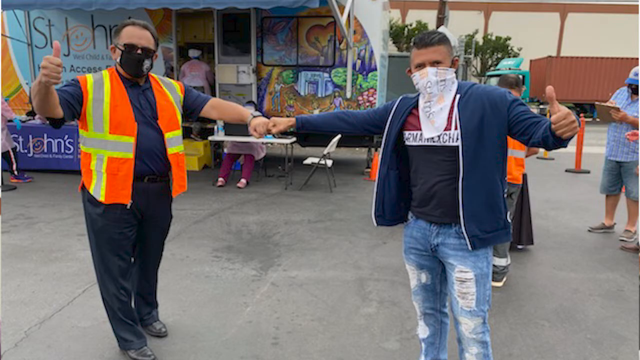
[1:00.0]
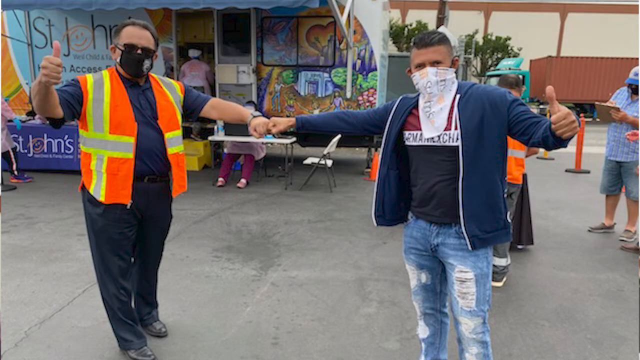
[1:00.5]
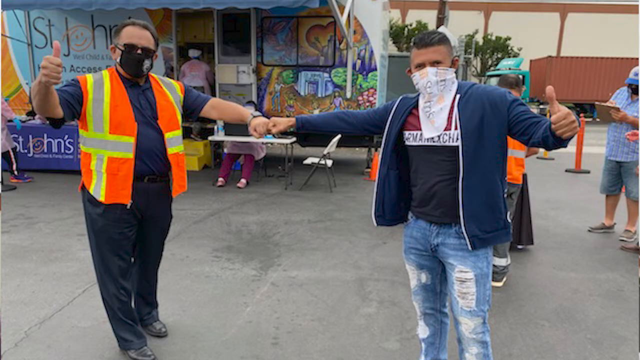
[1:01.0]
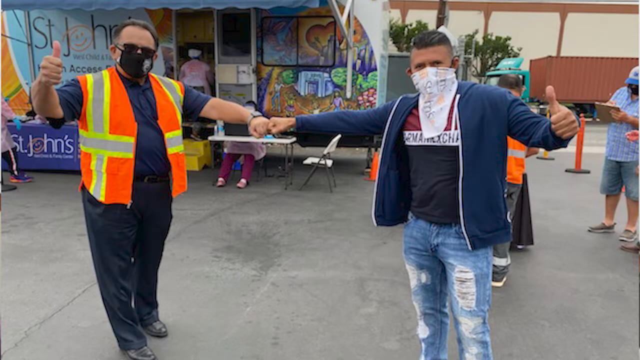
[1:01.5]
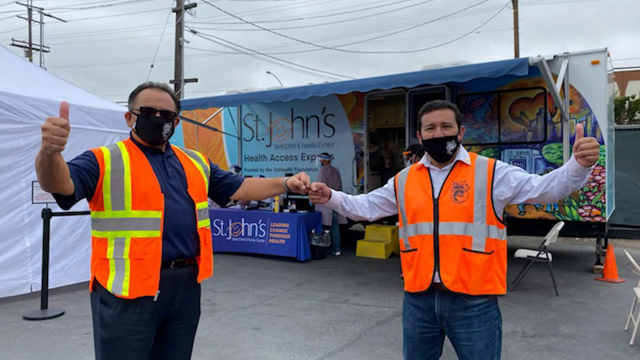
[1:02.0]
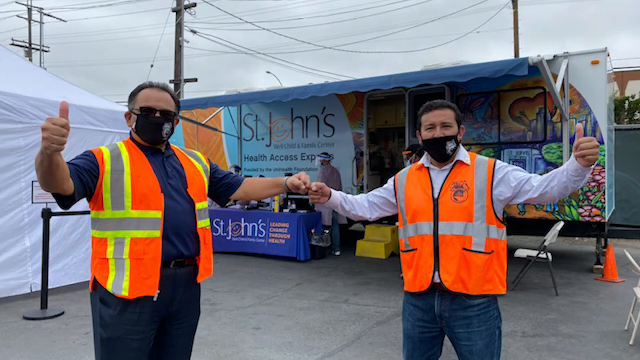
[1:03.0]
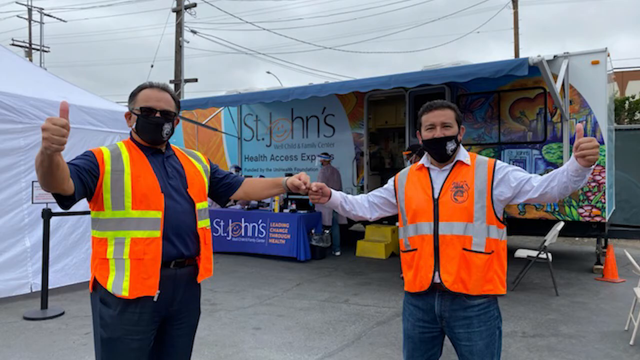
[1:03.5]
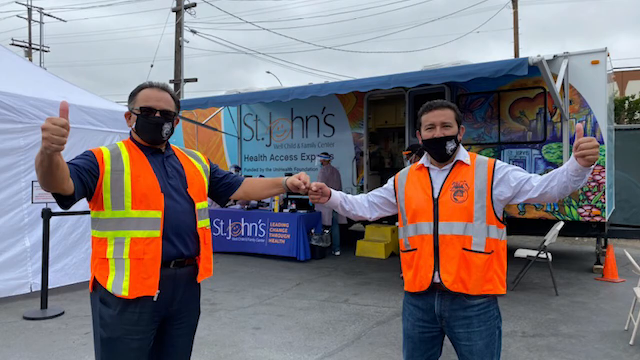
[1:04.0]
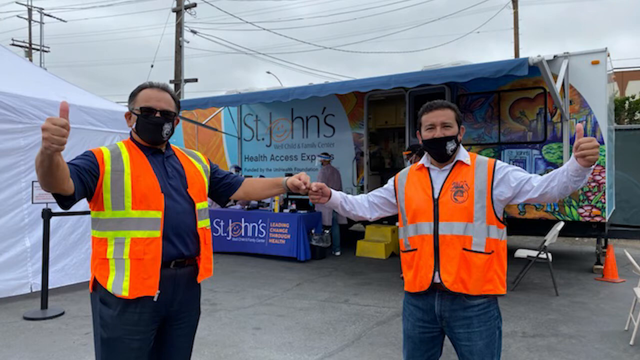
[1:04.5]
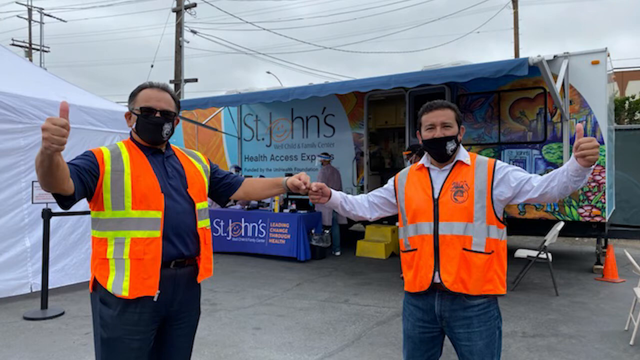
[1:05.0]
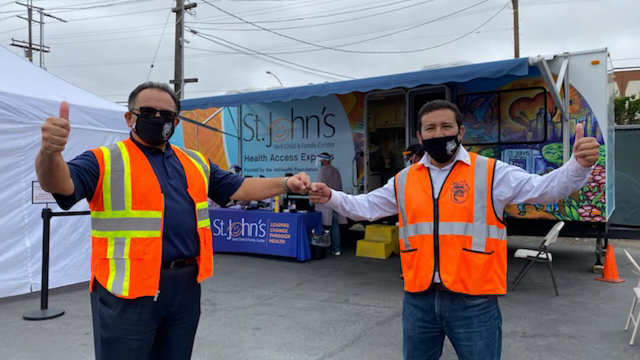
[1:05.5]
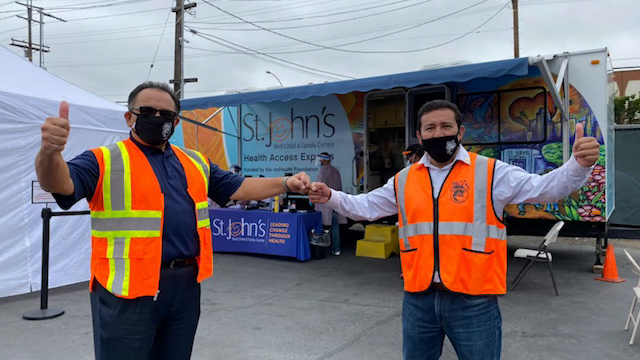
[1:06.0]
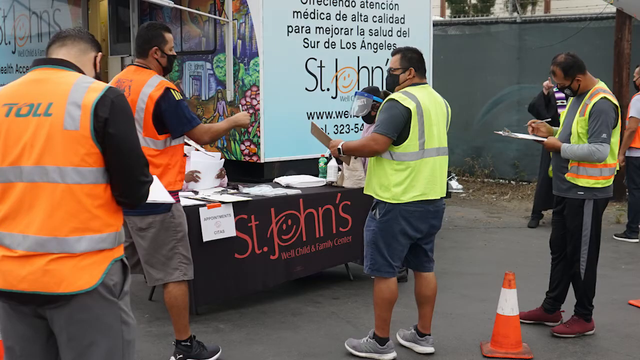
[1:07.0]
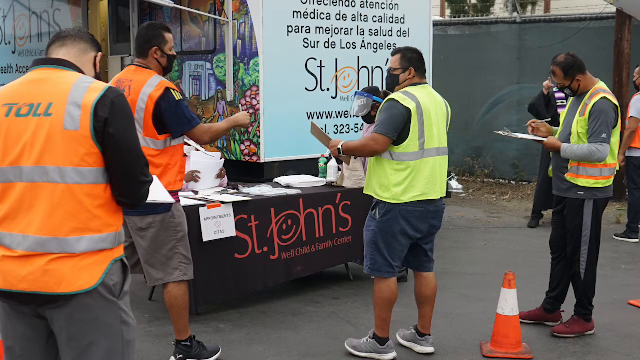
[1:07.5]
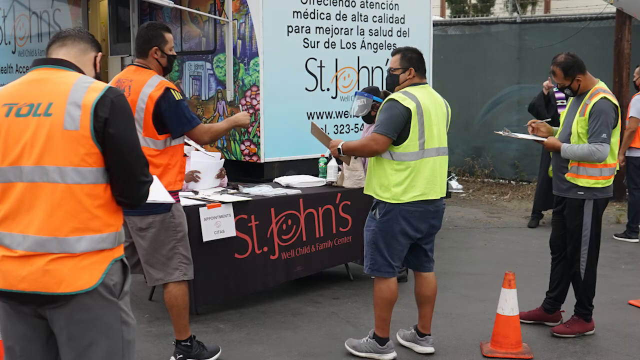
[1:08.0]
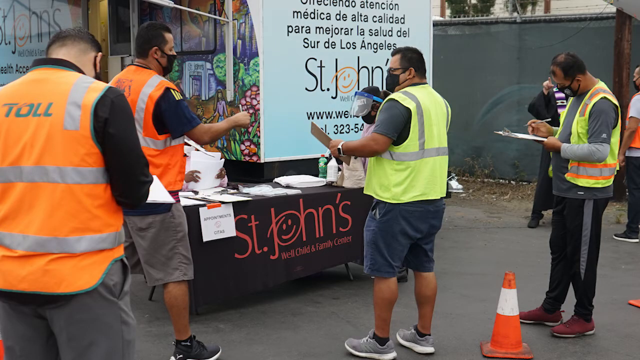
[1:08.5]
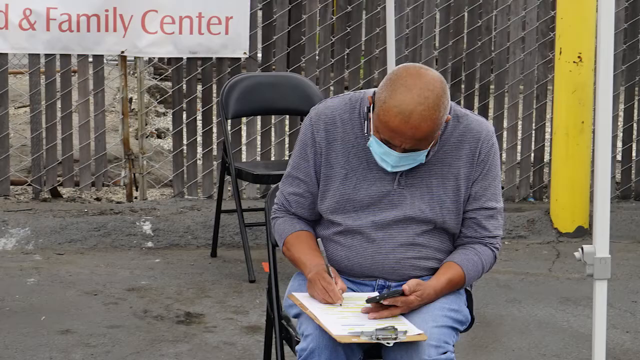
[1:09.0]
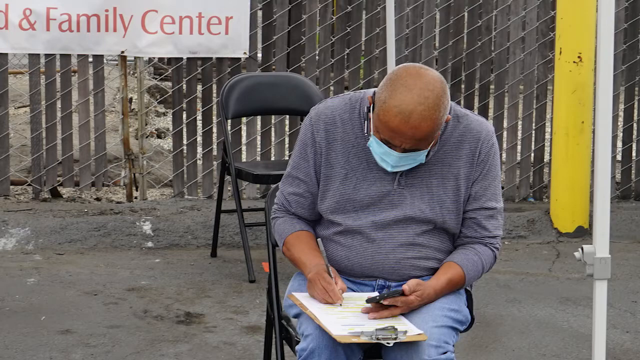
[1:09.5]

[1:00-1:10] A series of photos shows people in reflectors posing for pictures. In the first photo, one person wears a reflector and another does not, and all of them cover their faces with masks. Another photo shows a group in reflectors, also posing and all wearing masks. An old man sits checking something on his phone and writing on a paper; behind him are a black seat and a yellow post. The camera shifts from one photo to the next, each showing a different set of people in different uniforms and different types of shoes; some are in uniform and some are not, but all wear face masks. They are on an open ground, some seated and some standing.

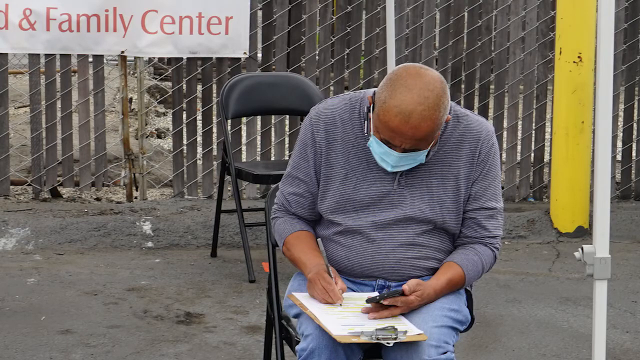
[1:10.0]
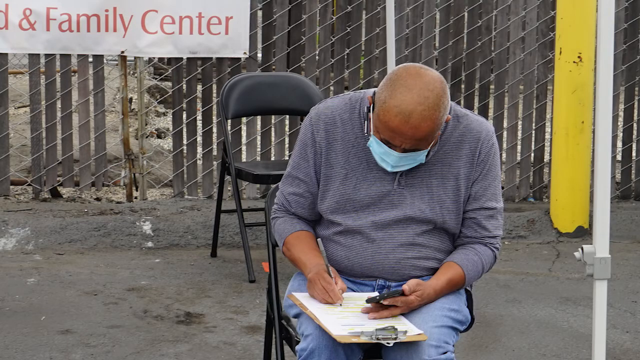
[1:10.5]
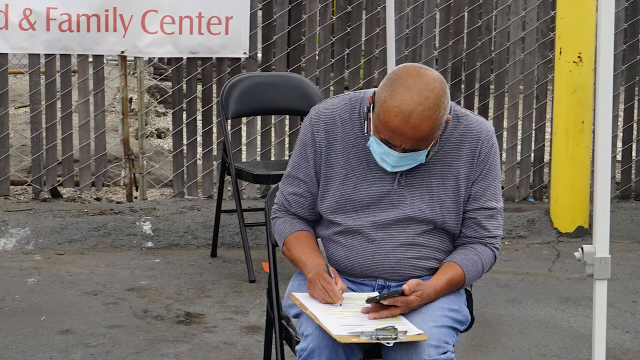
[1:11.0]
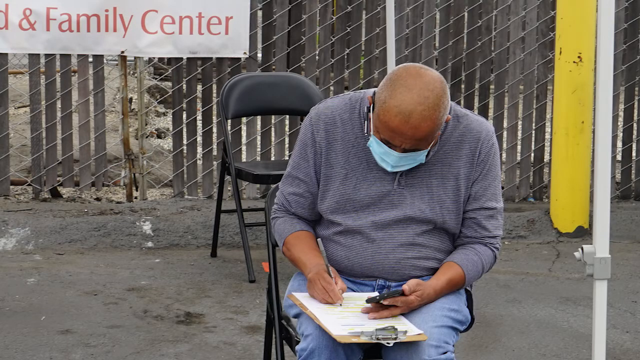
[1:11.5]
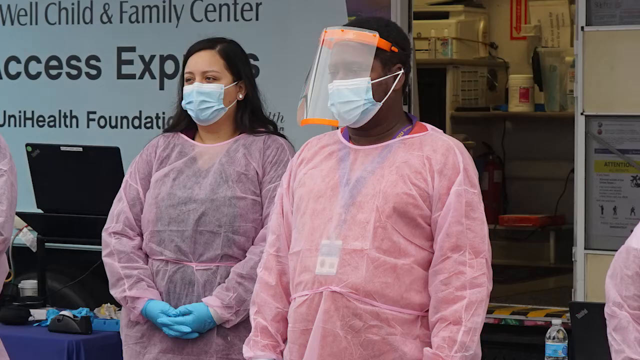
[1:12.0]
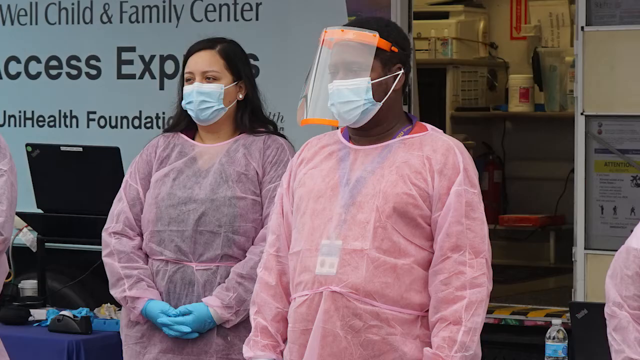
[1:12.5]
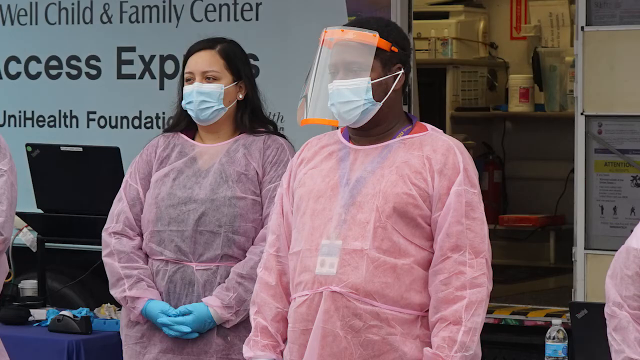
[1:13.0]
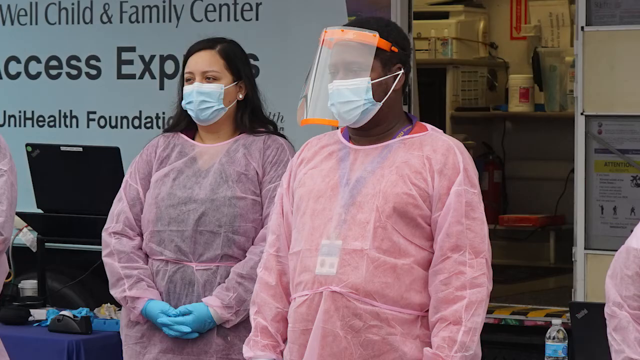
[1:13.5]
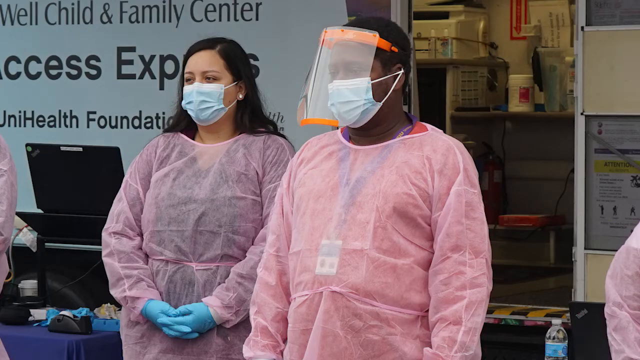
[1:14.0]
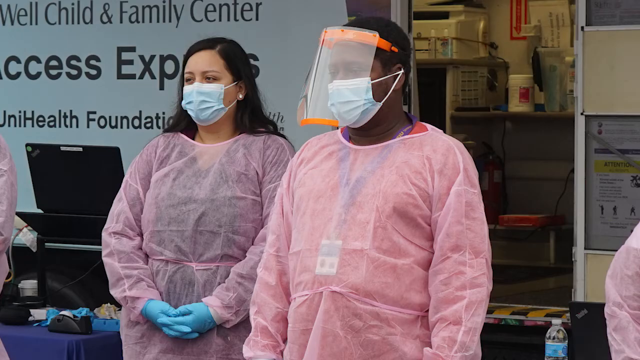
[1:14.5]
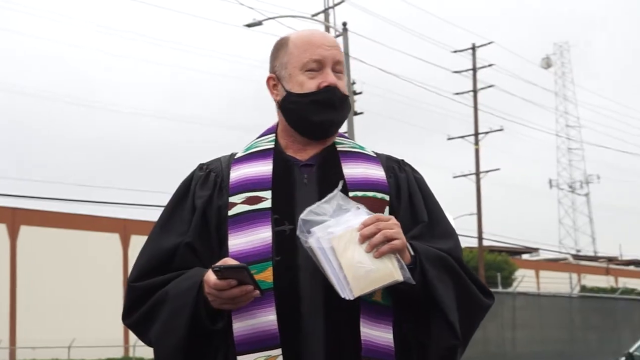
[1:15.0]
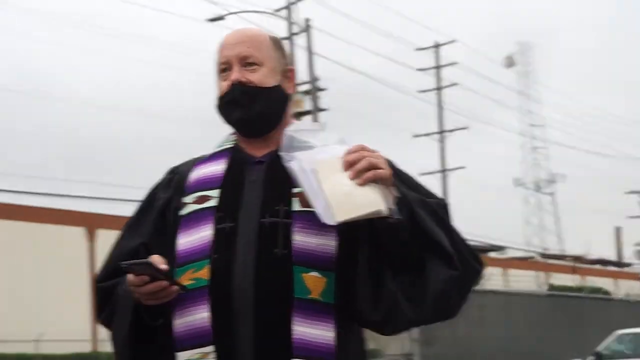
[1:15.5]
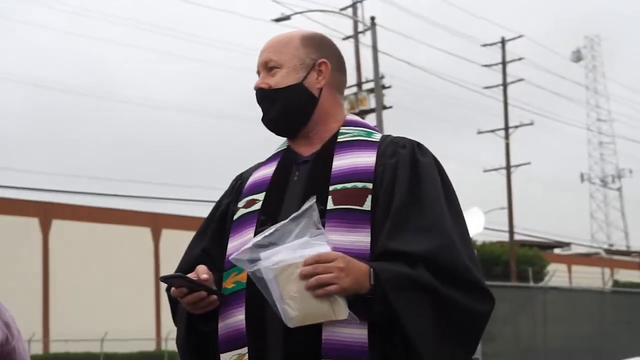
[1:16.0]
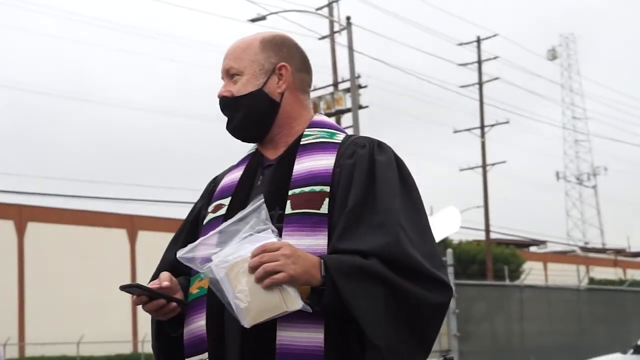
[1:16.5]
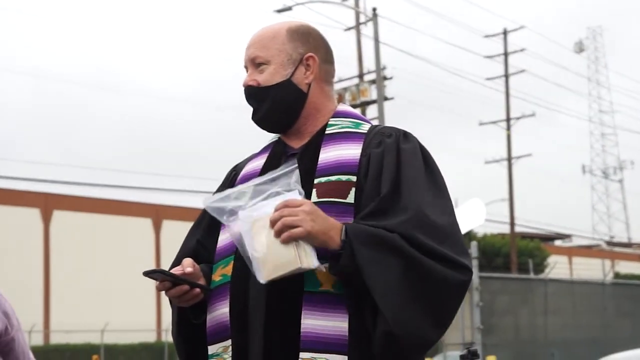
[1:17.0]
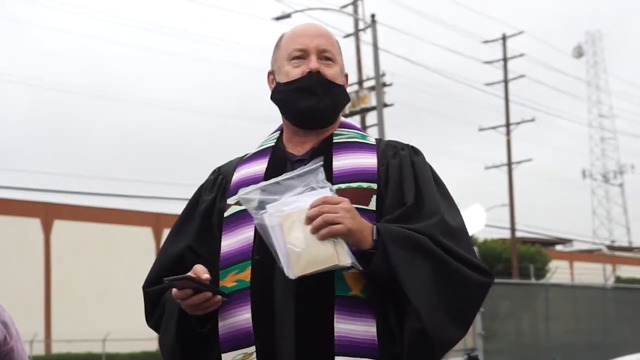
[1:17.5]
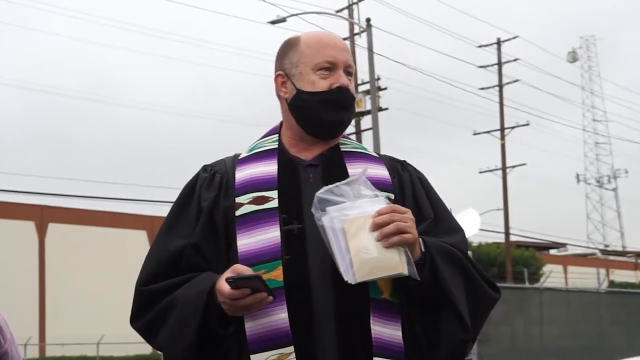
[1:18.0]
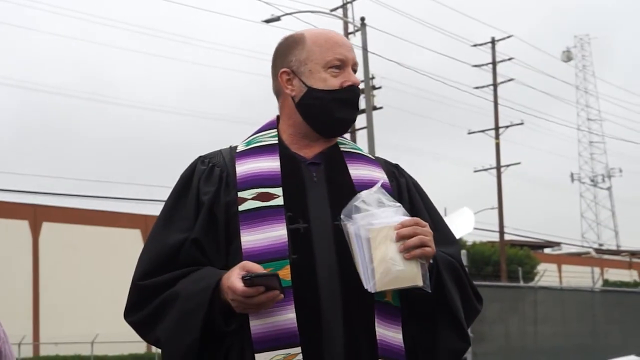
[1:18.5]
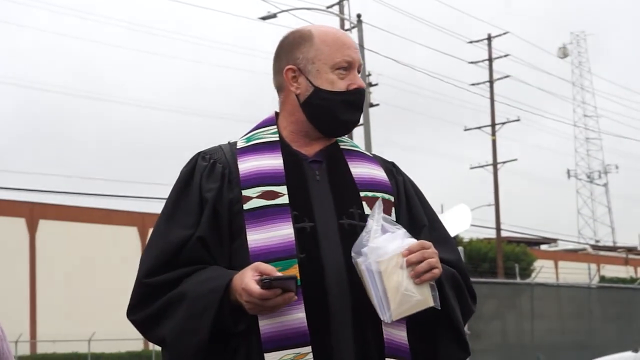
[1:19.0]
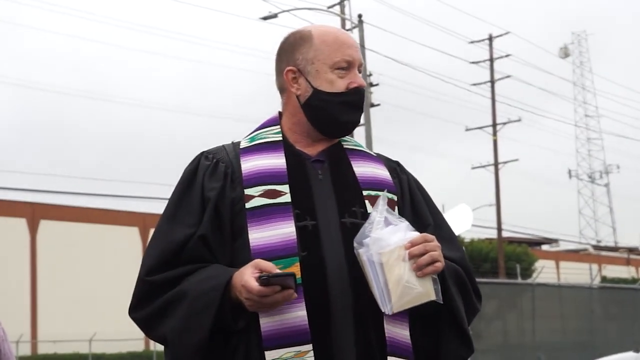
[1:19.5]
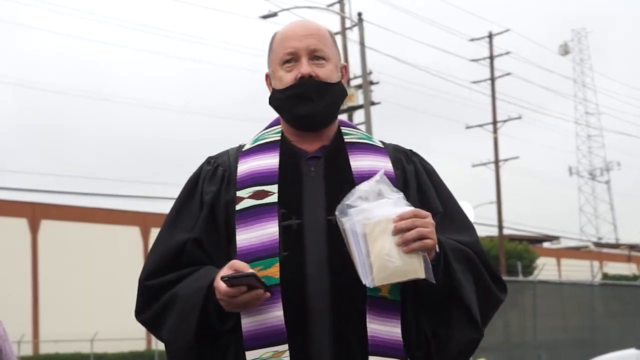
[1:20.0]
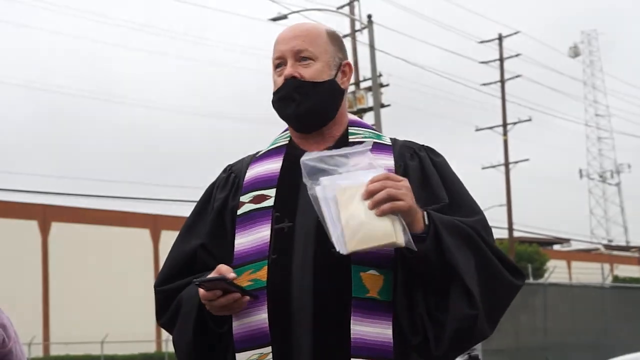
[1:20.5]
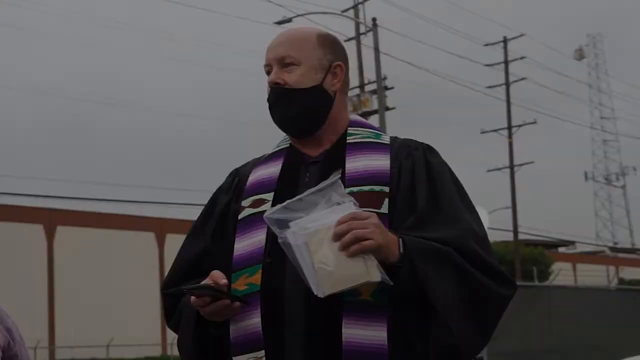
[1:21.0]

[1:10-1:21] A man in a blue mask puts something on a paper. Women wear something pink that covers them, and they have gloves on. A man communicates on something while holding something else in his other hand; he wears a colorful scarf with shades of purple, white, green, and chocolate. There are chairs, with some people standing and others seated, covering themselves. Behind the women there is equipment in the room, including computers. People stand listening to the man wearing black. Electricity poles are also visible.